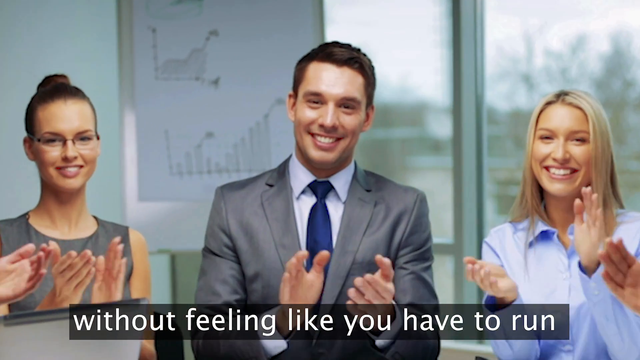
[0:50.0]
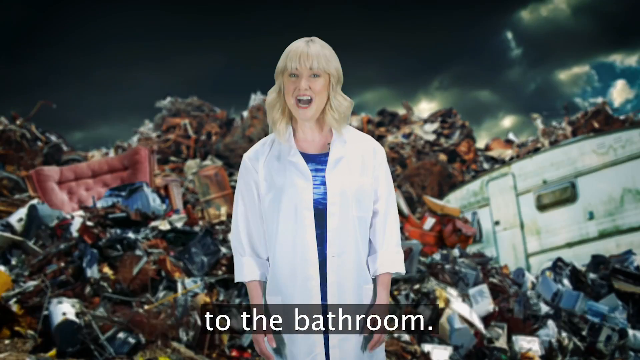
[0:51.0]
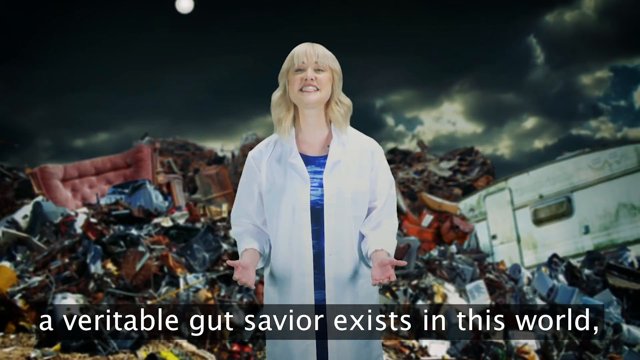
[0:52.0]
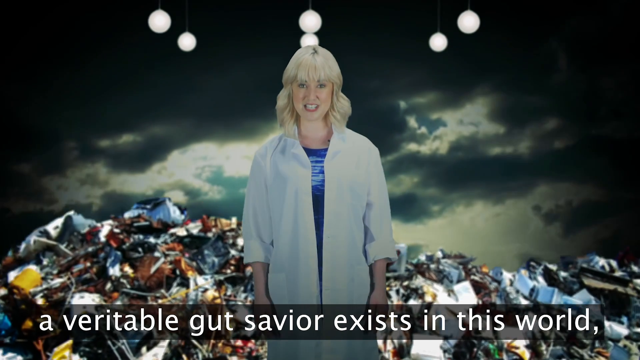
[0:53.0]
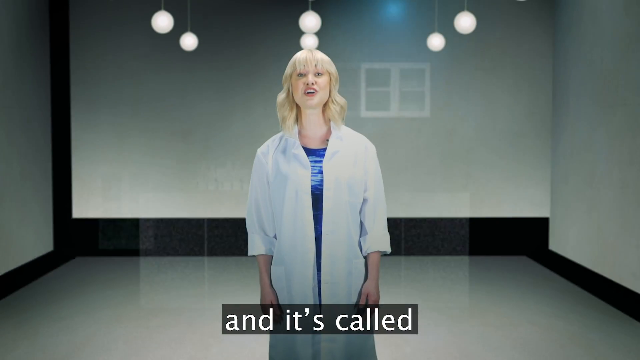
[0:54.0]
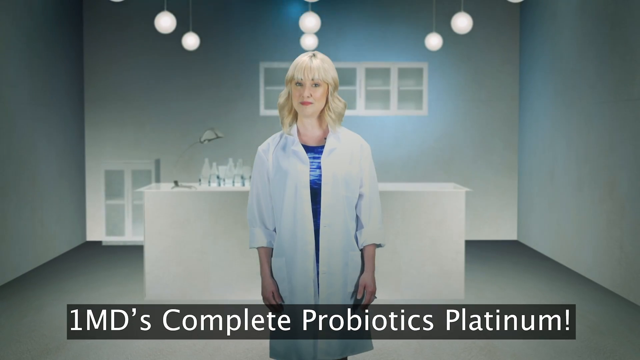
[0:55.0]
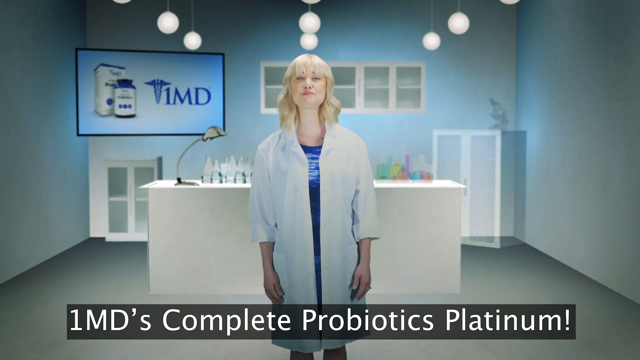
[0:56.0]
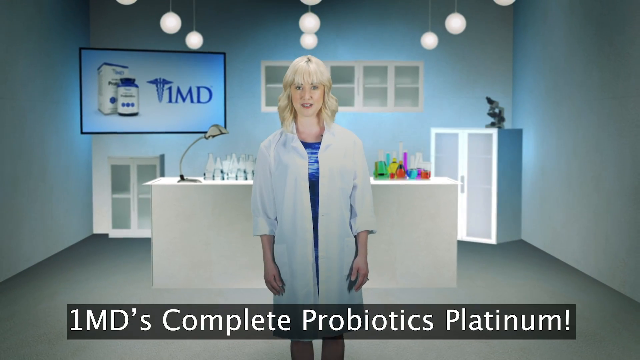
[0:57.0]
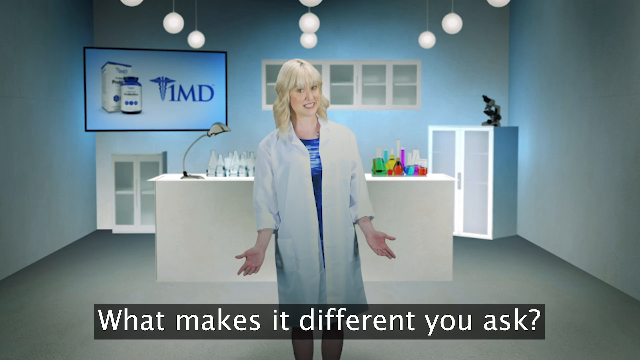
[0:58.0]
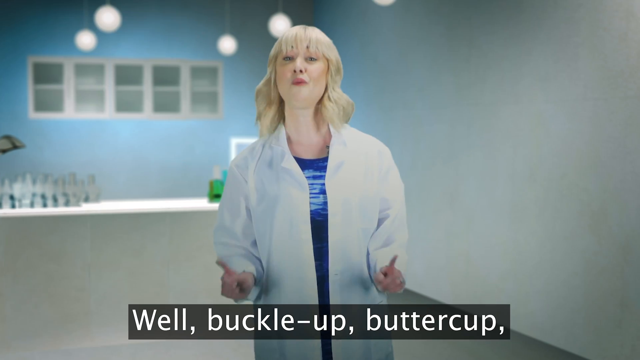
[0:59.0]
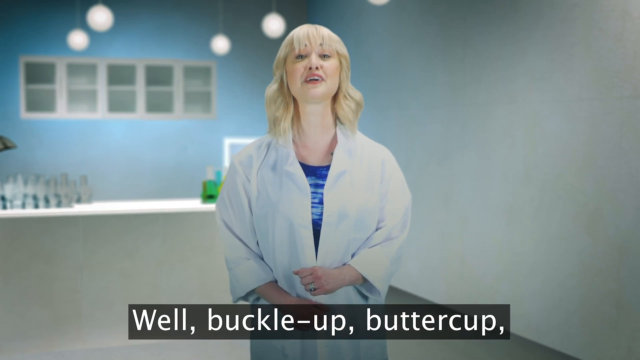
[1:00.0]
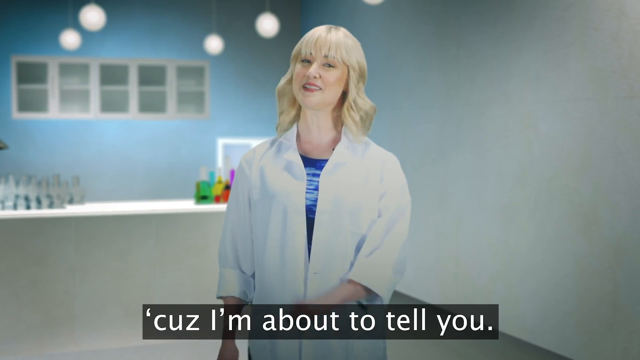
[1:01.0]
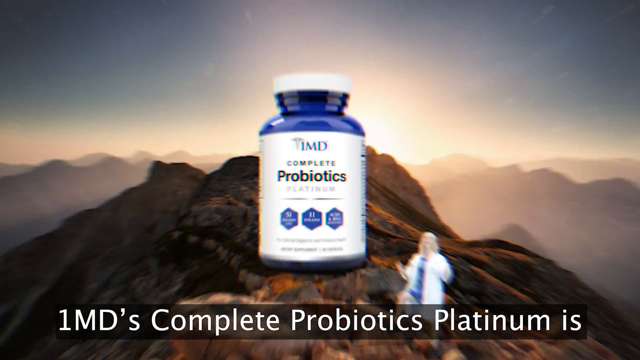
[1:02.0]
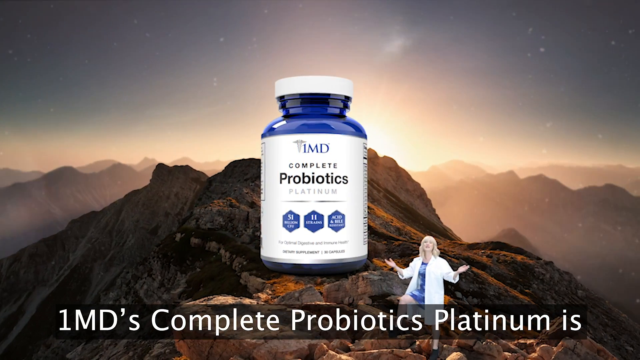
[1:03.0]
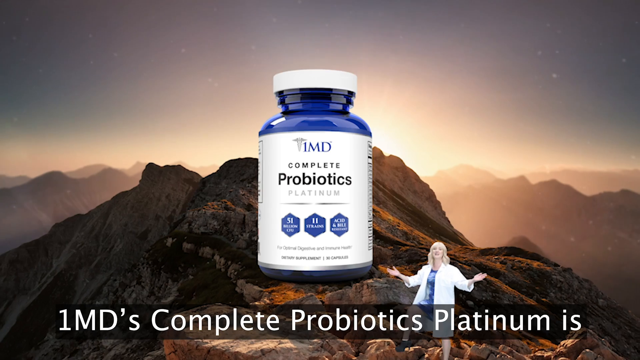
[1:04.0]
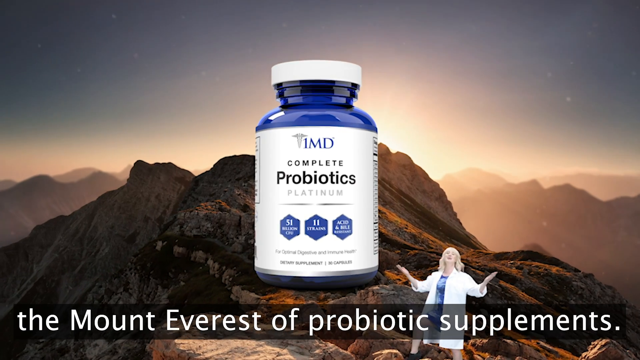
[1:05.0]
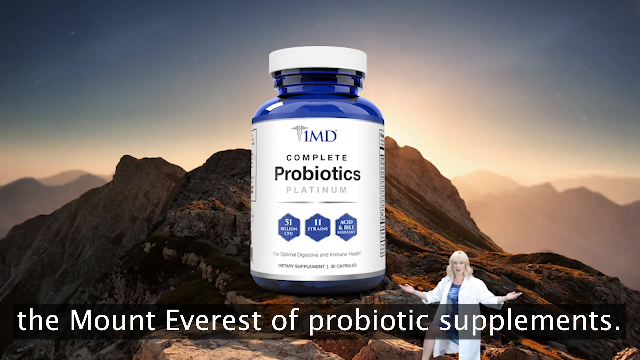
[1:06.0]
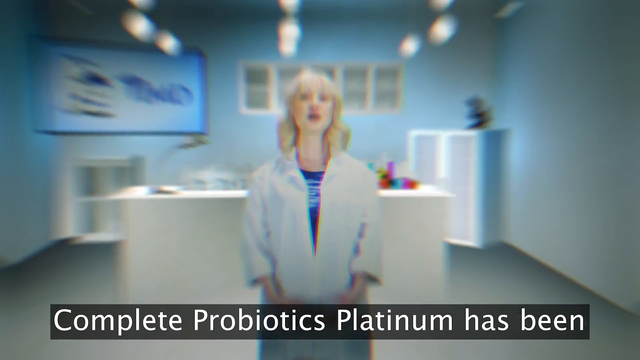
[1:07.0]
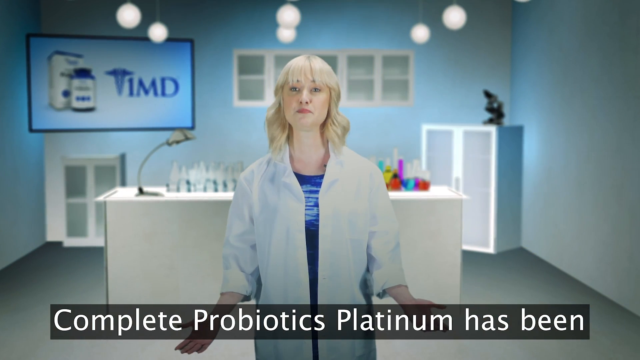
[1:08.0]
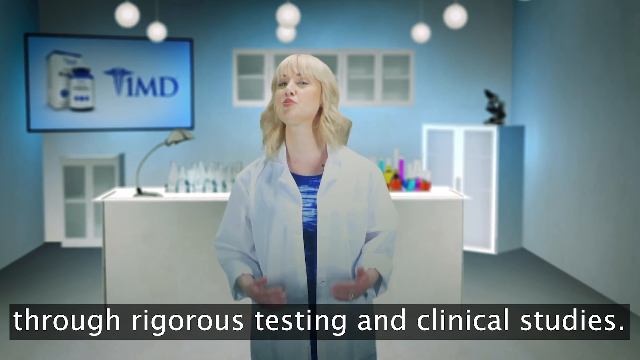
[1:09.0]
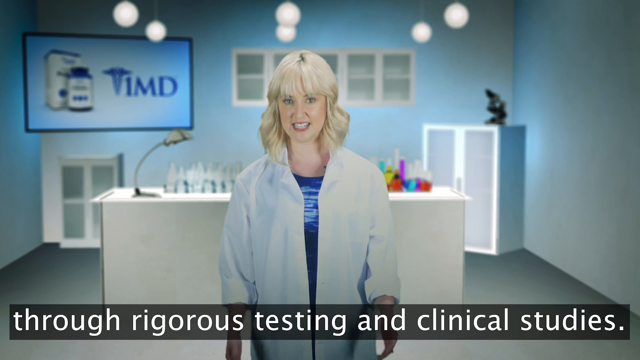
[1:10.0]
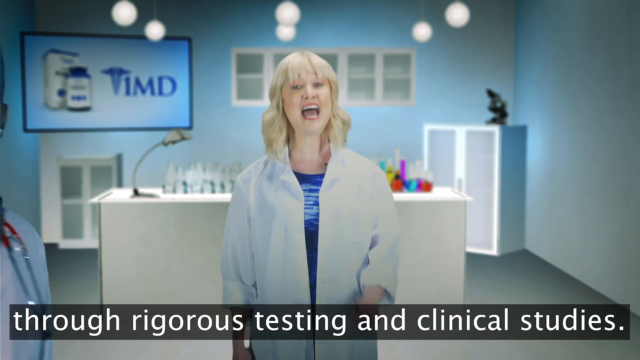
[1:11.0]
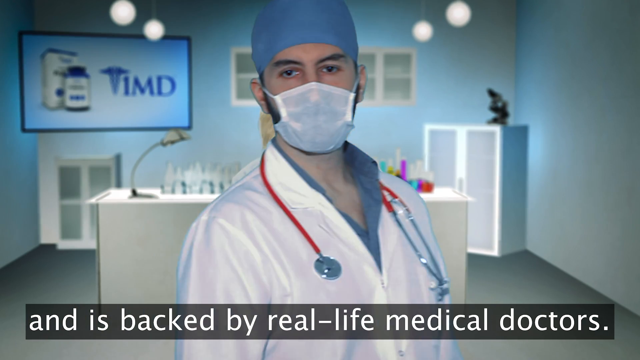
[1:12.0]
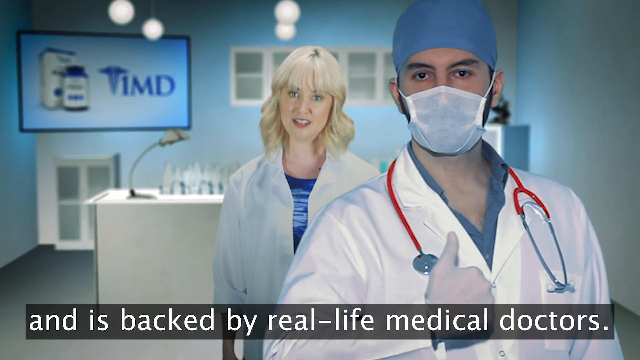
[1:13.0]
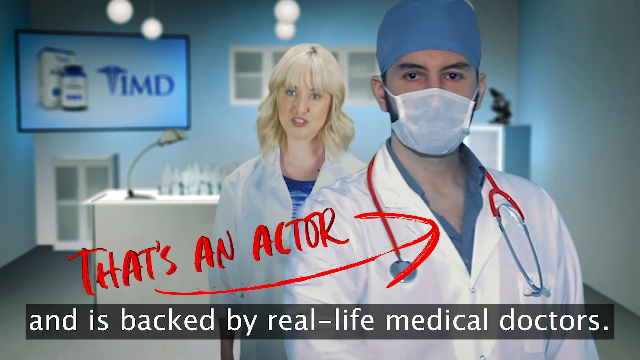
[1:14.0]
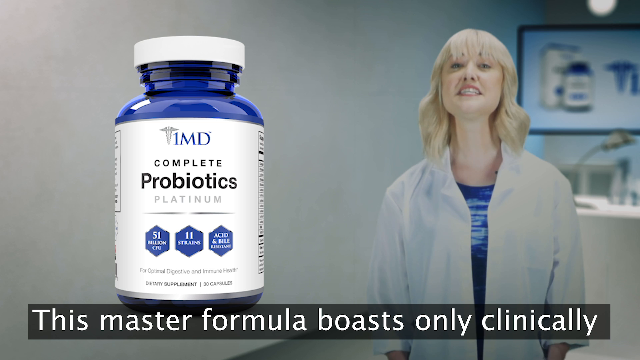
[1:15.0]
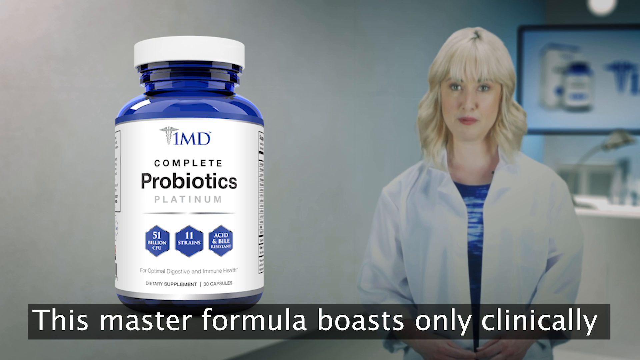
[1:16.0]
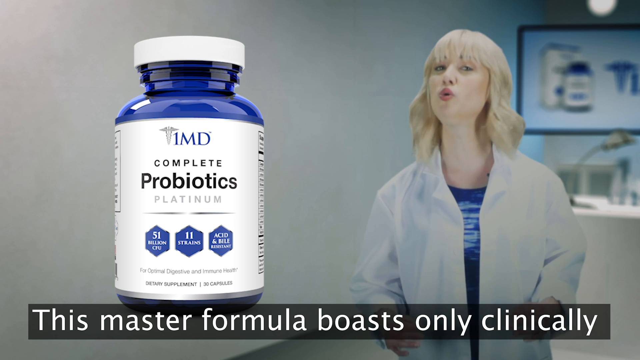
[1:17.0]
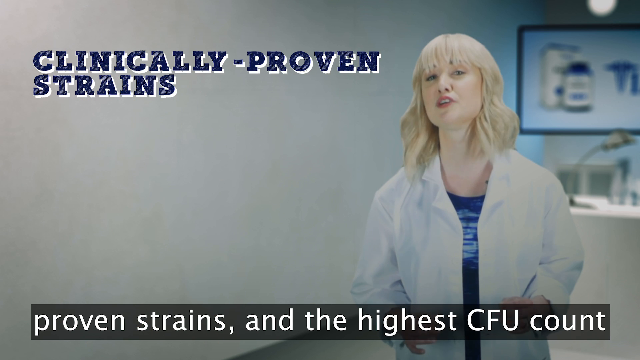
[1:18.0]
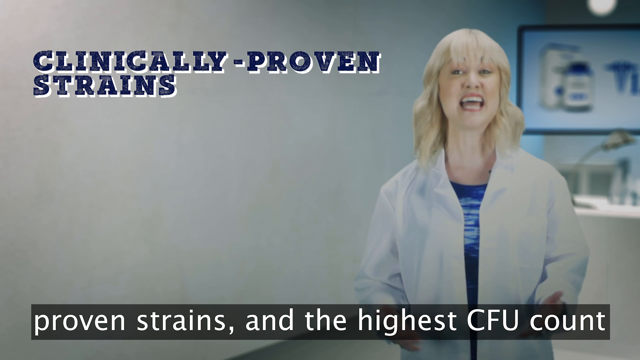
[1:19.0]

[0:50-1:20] An office environment shows a man surrounded by two women clapping. The scene changes to the blonde woman in the white lab coat and blue shirt standing in a garbage dump. The garbage dump in the background falls away, revealing clouds, and then the scene becomes a white room that appears to be a lab, with a TV screen on the left, as she talks. She motions with her right and left hands, palms up, then moves her hands toward each other with fists clenched. A screen shows a 1MD bottle with the text "complete probiotics"; the bottle is blue with a white label and appears enlarged on a mountain range. The video returns to the woman in the same lab environment, gesturing with her hands, palms up and fingers pointed. A picture of a doctor with his thumbs up, wearing a blue cap and a white mask, moves across the screen, and text flashes across reading "that's an actor". The video then returns to the bottle of complete probiotics with the text "clinically proven strains".